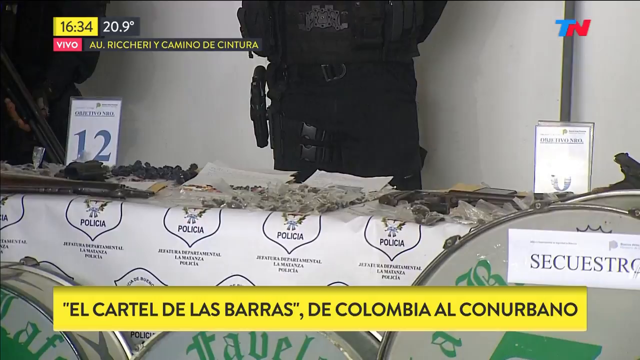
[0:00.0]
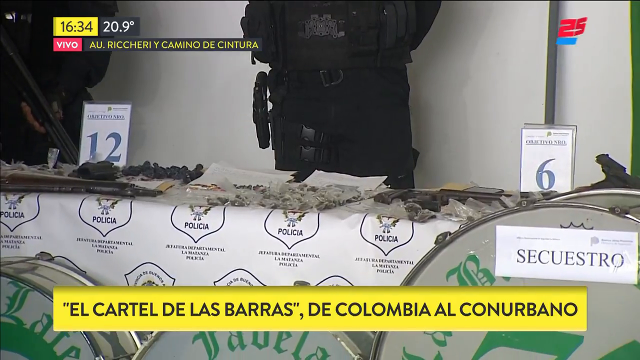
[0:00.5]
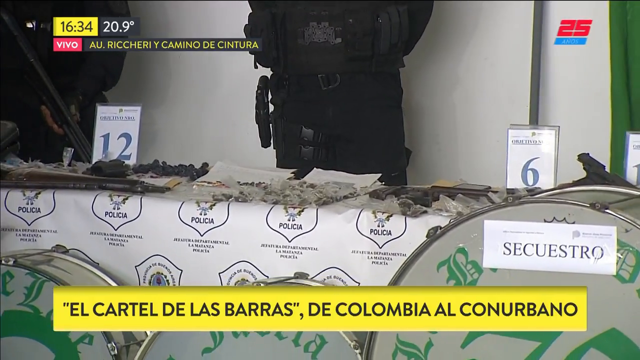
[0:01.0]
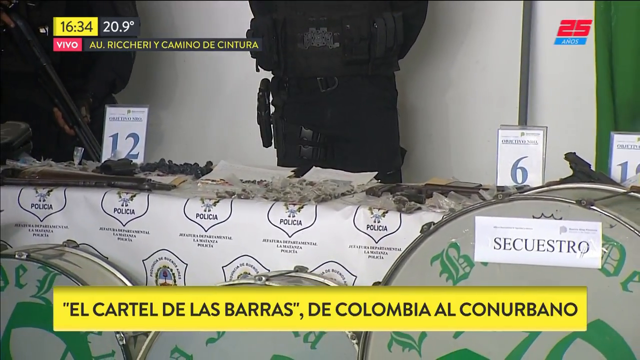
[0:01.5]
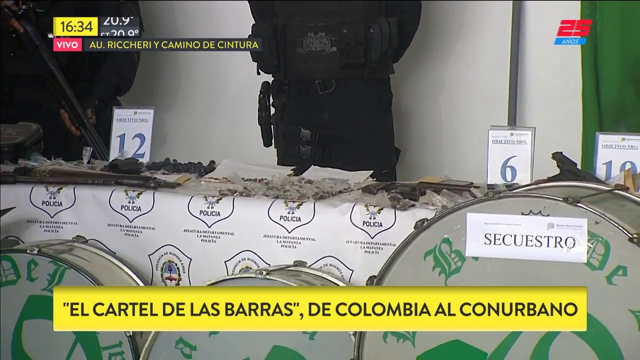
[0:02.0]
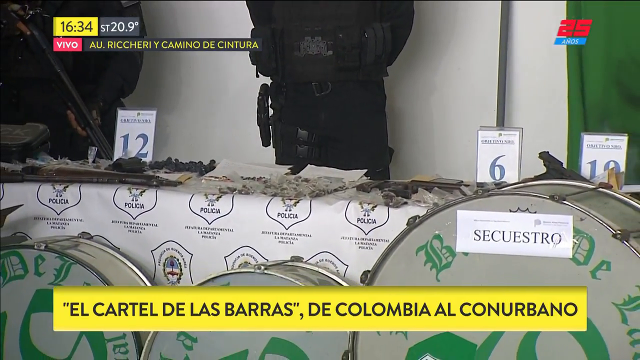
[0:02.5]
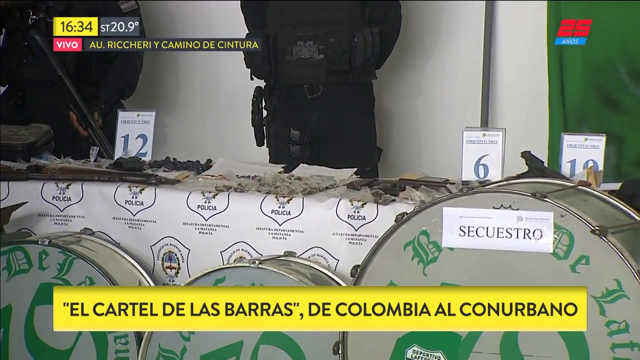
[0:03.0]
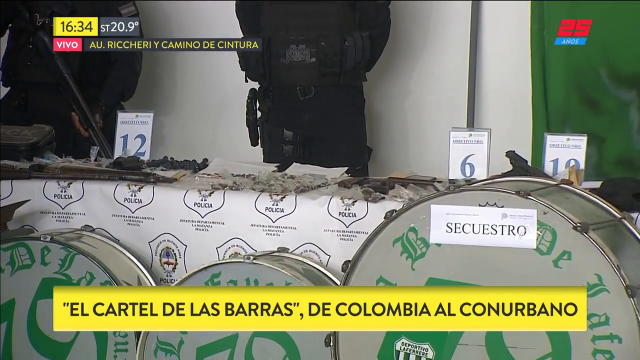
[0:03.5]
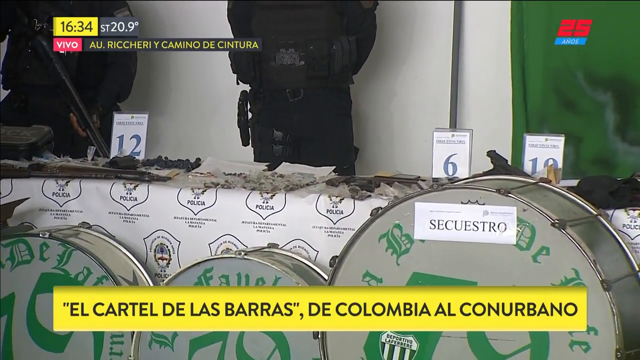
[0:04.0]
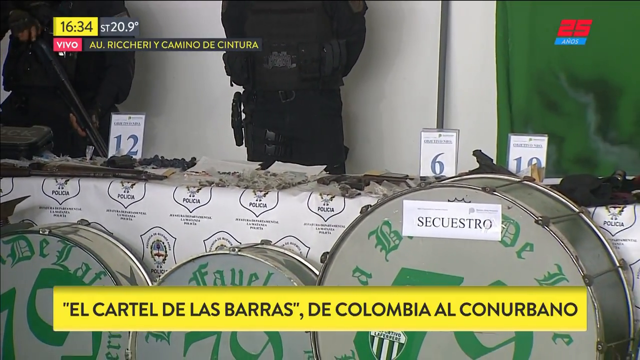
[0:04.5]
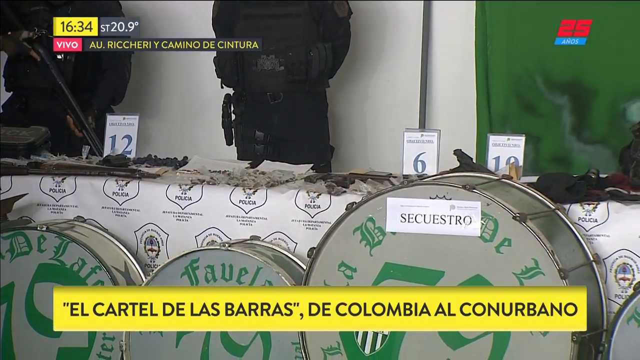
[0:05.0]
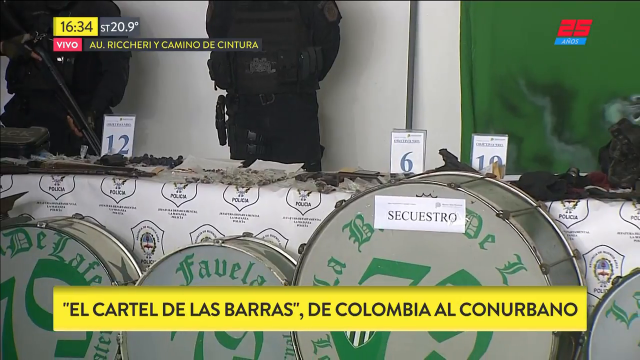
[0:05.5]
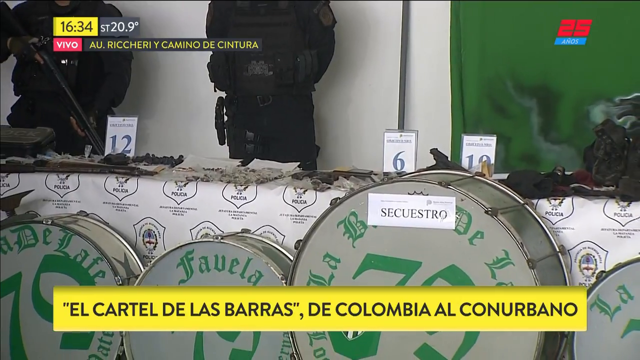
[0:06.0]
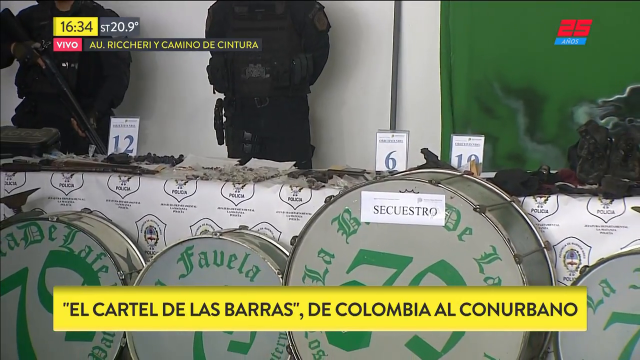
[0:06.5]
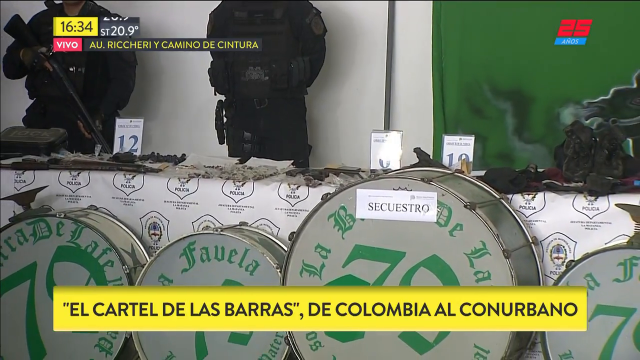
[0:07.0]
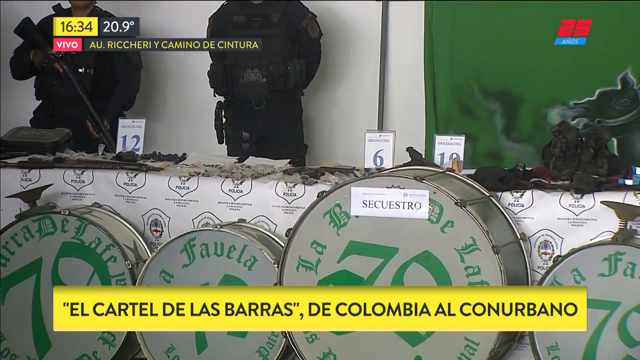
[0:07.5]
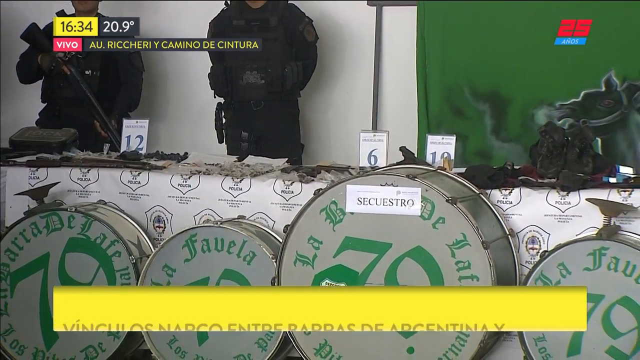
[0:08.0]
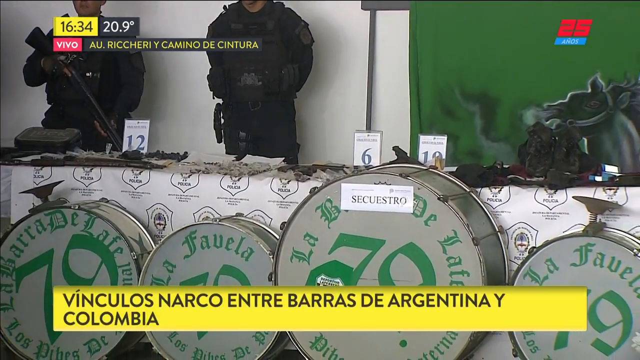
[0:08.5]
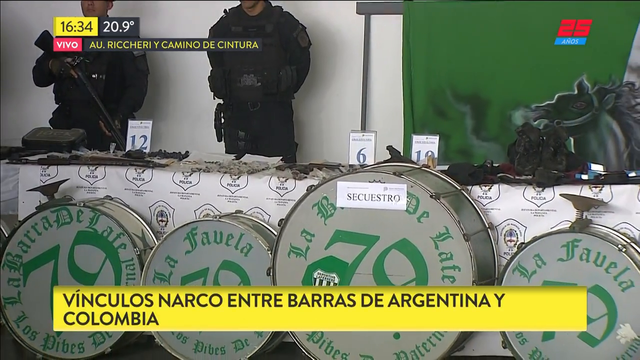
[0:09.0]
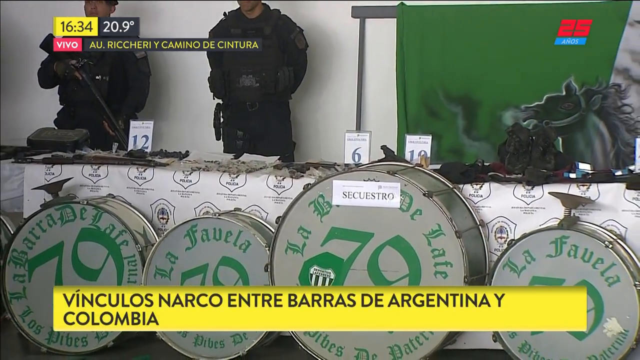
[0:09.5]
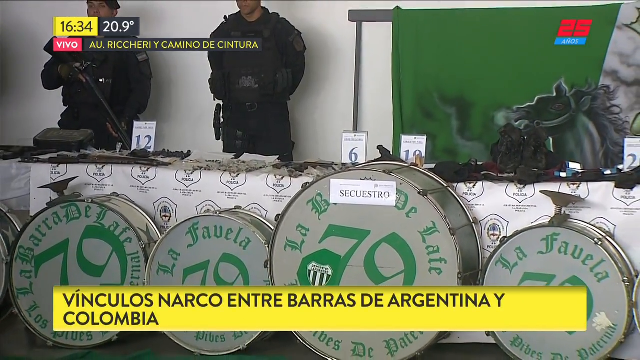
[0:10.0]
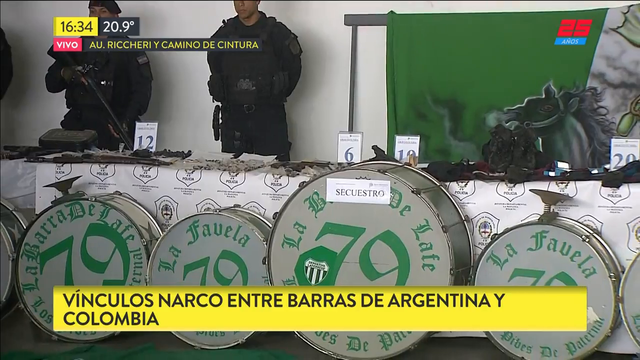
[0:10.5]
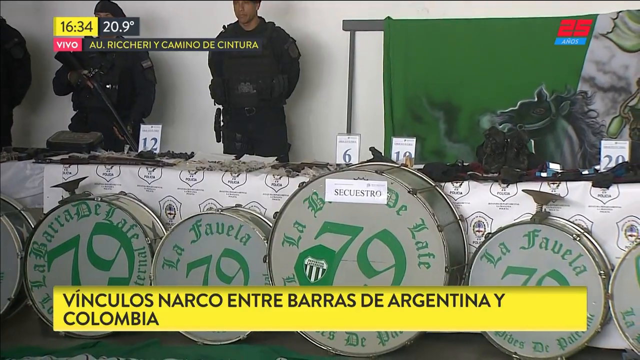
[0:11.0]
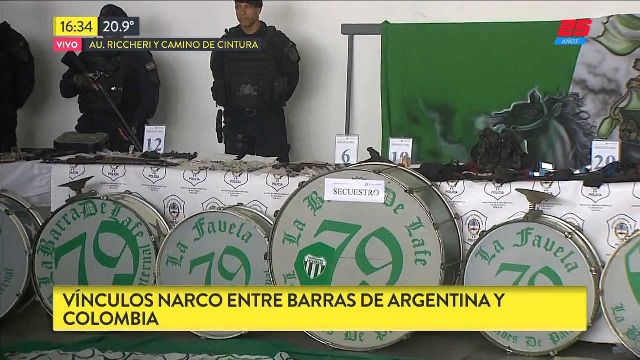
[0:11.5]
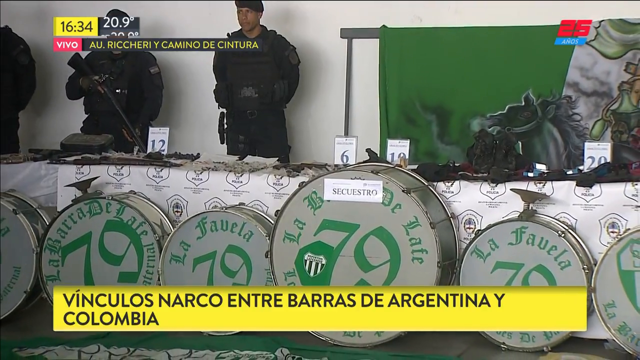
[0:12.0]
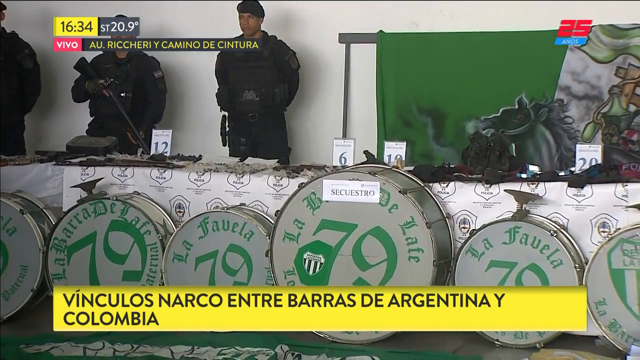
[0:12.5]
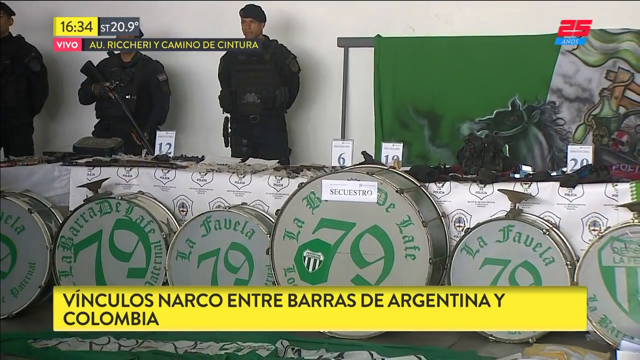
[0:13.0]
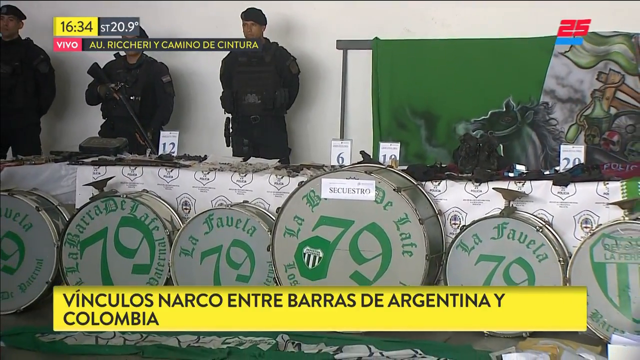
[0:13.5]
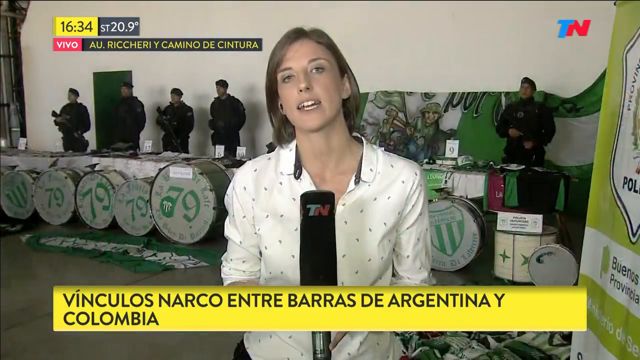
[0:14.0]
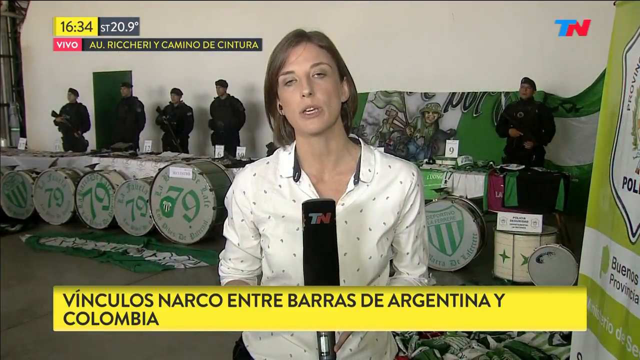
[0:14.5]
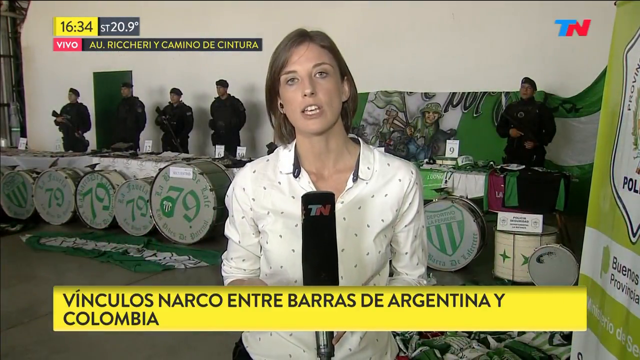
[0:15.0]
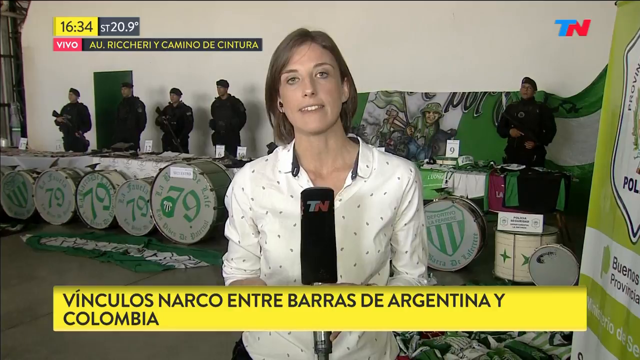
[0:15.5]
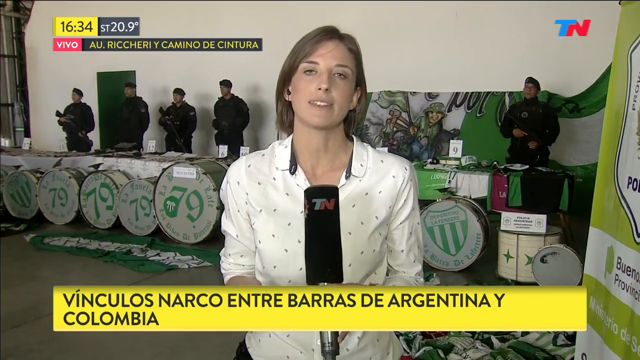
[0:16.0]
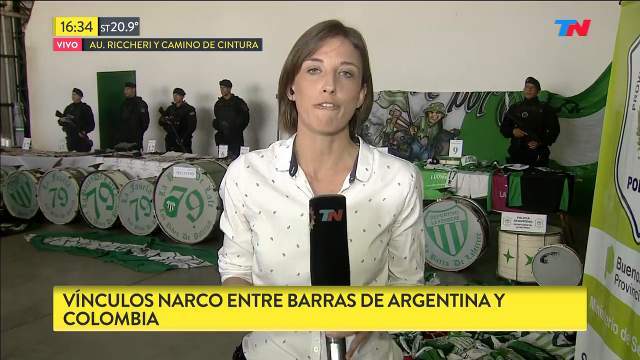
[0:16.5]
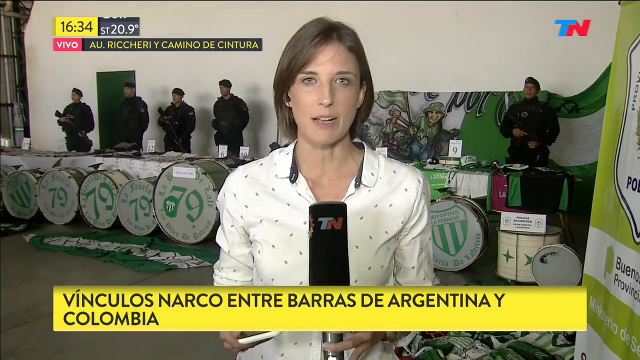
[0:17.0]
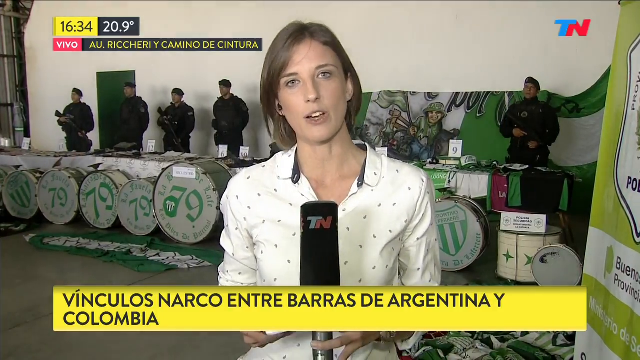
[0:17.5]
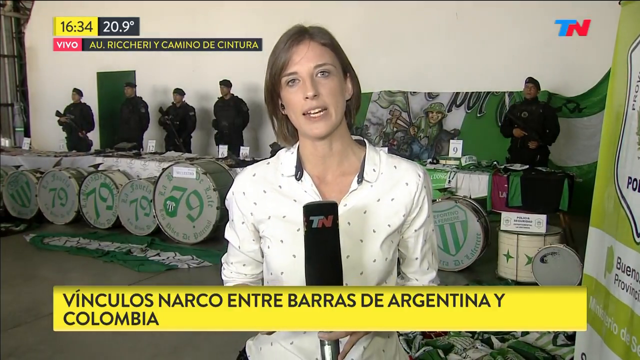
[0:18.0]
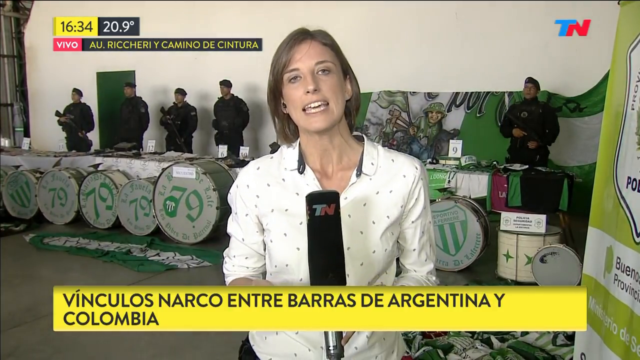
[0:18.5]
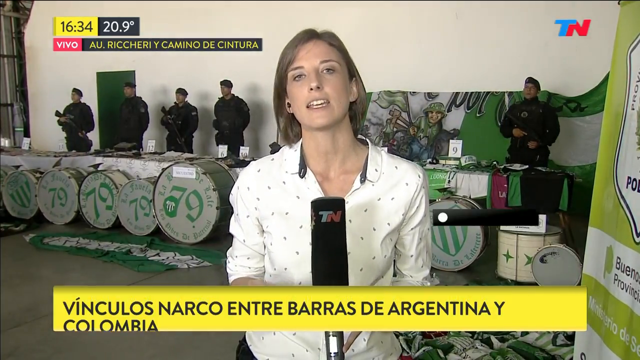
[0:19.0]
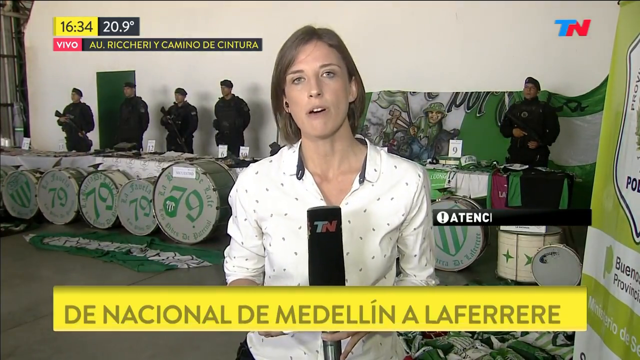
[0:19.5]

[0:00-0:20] In an indoor space there is a table with large green and white circular objects of different sizes, most likely banners, with numbers inside them. Text is written around their edges and there is a number in the center; they are labeled with small numbers, the most visible being 79. Behind the tables are men who appear to be wearing black uniforms and look like policemen. To their side is a green background, and in the corner where they stand there is a white background. Later, in the same space, a female presenter appears in the foreground wearing a white blouse with small patterns, a white jacket and a blue top. She holds a purple microphone marked TN, the news logo, and is seen talking as she delivers a report. Yellow running text appears on the screen.